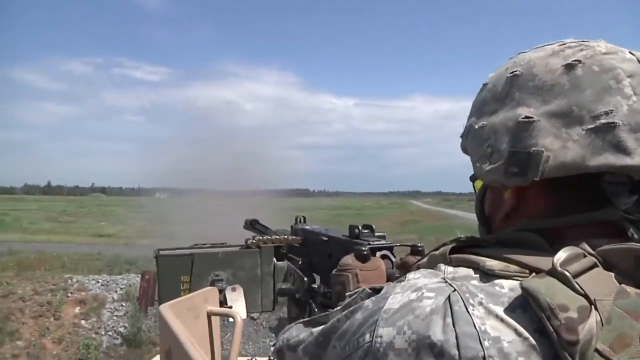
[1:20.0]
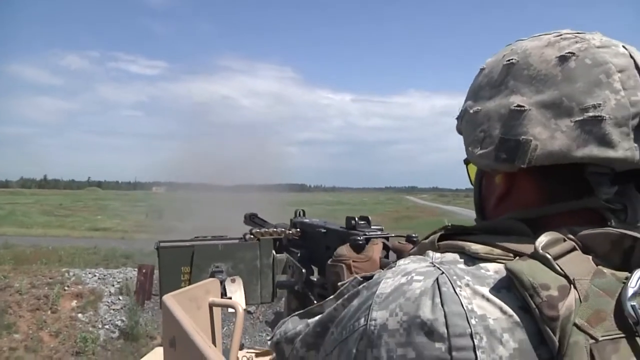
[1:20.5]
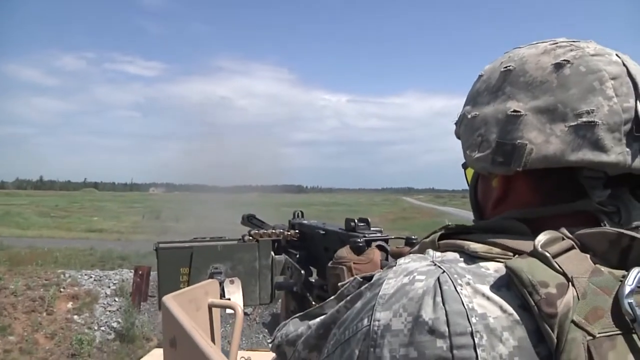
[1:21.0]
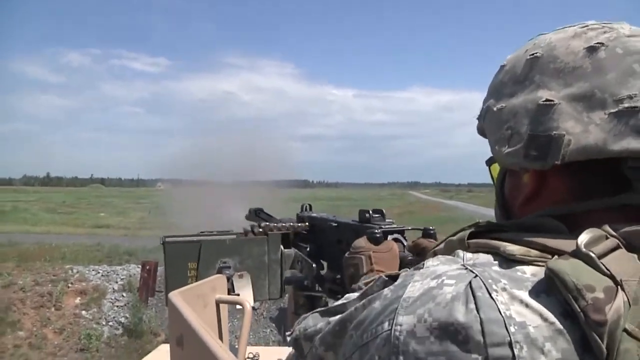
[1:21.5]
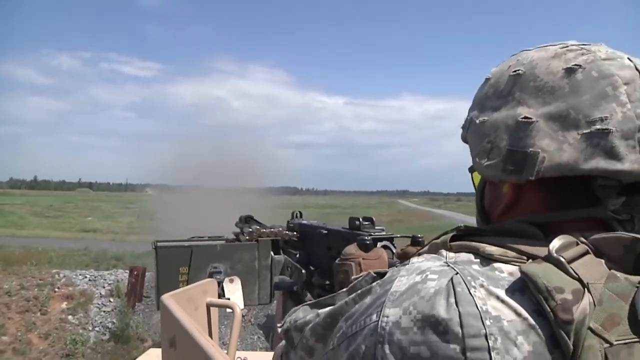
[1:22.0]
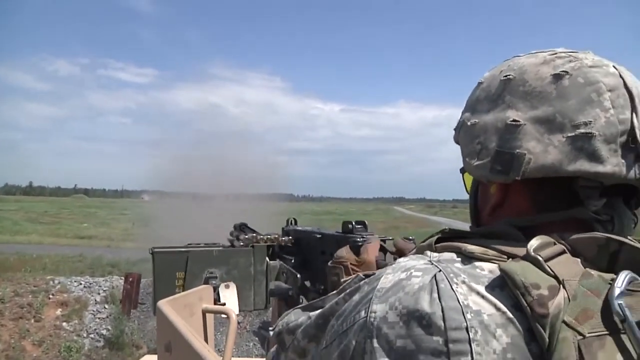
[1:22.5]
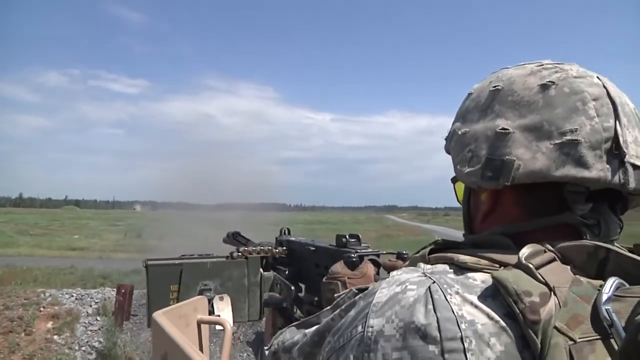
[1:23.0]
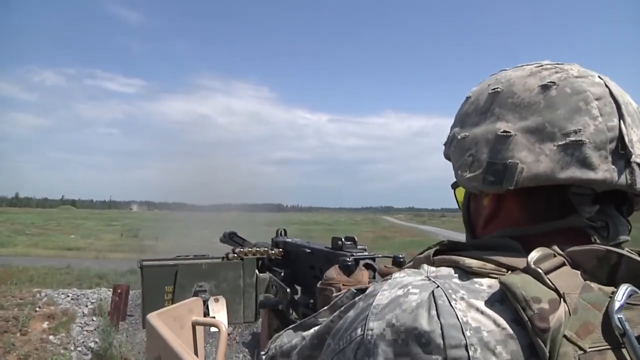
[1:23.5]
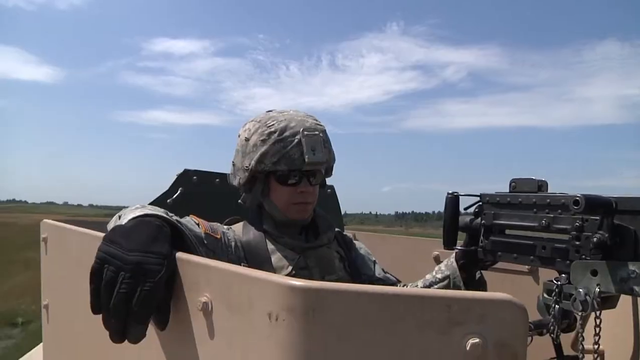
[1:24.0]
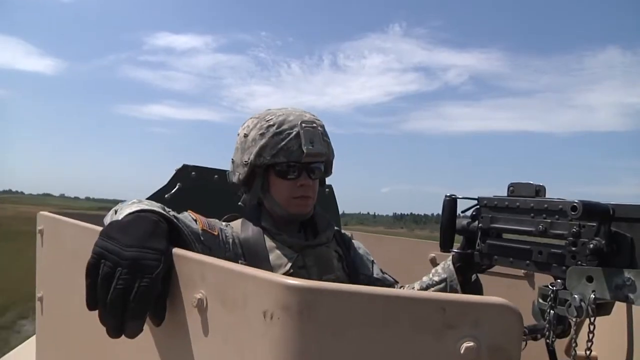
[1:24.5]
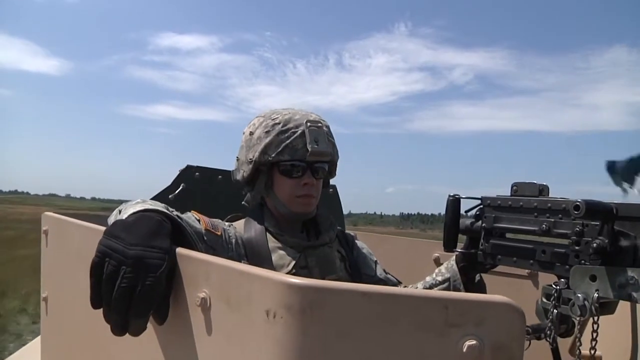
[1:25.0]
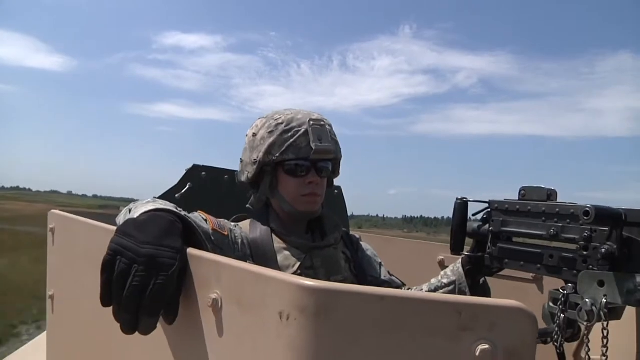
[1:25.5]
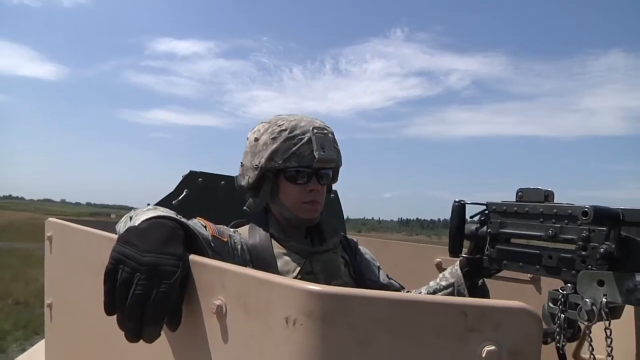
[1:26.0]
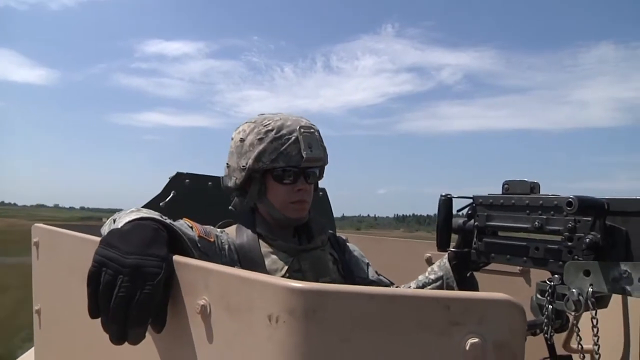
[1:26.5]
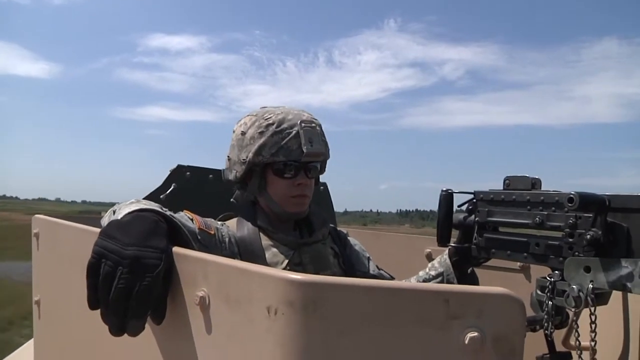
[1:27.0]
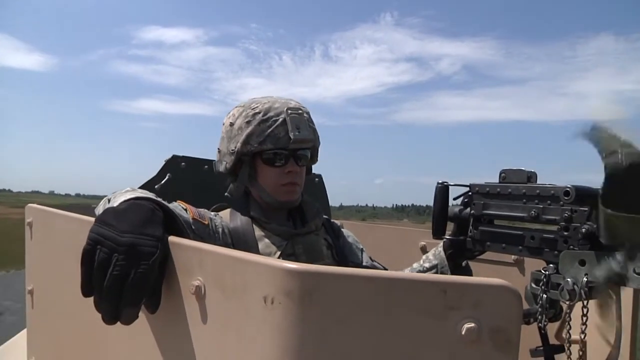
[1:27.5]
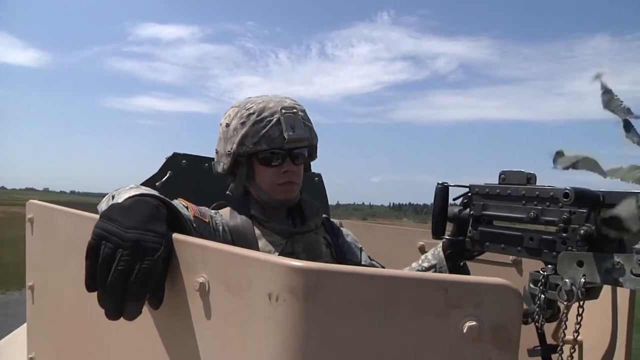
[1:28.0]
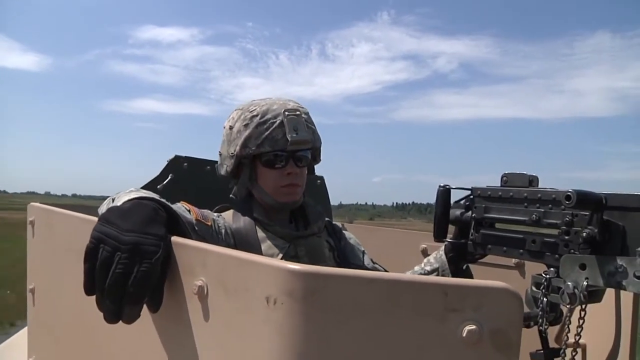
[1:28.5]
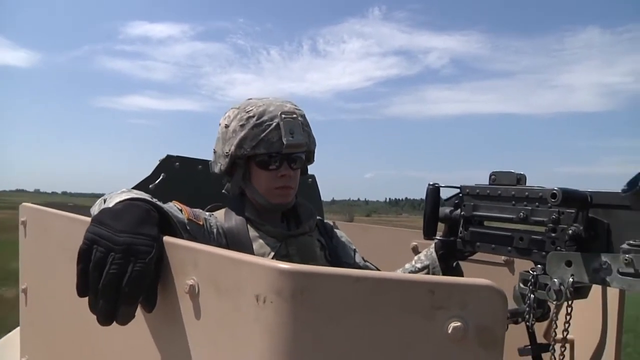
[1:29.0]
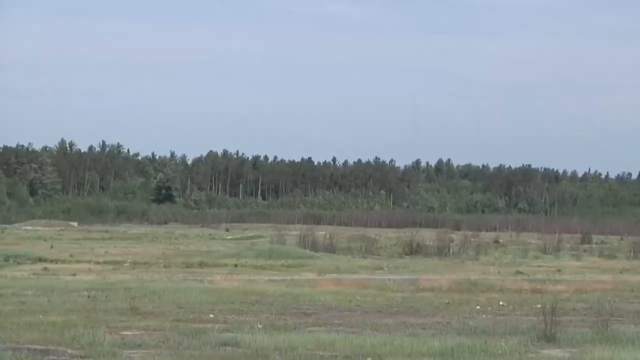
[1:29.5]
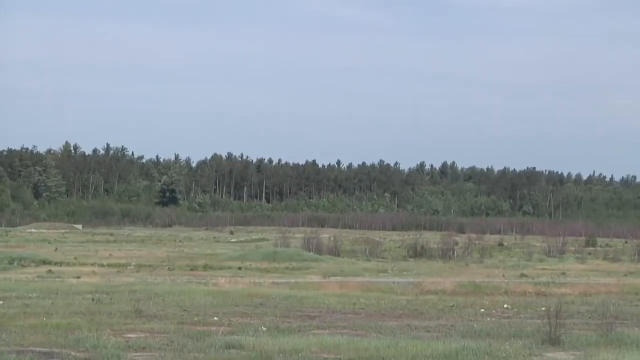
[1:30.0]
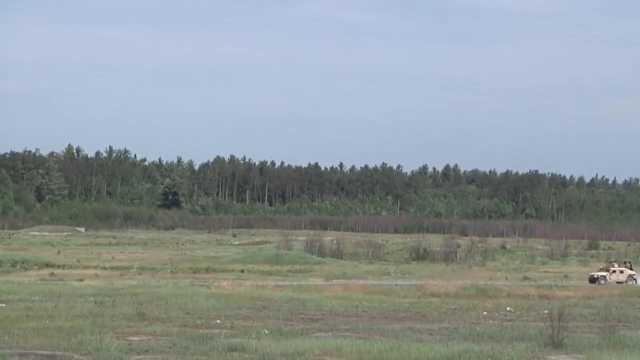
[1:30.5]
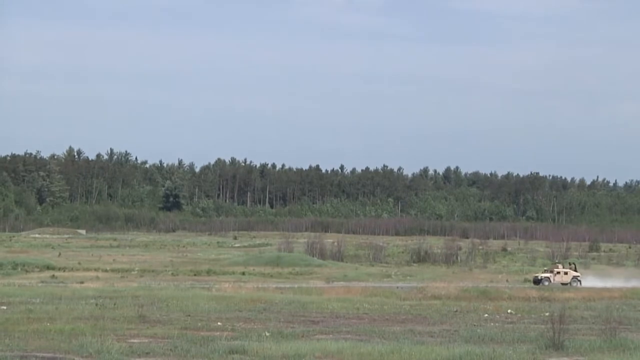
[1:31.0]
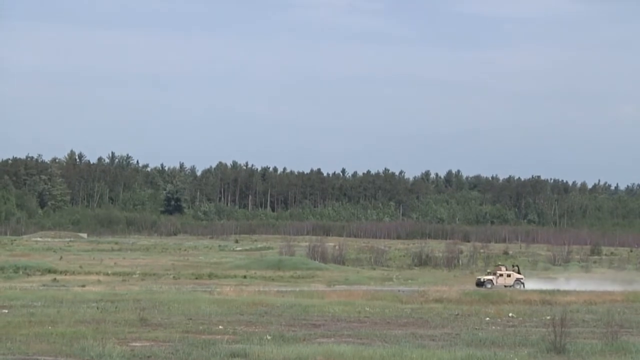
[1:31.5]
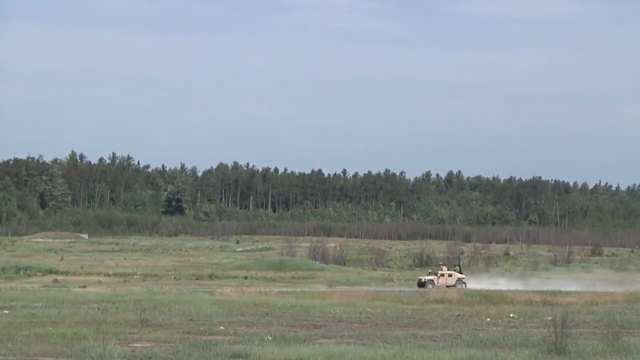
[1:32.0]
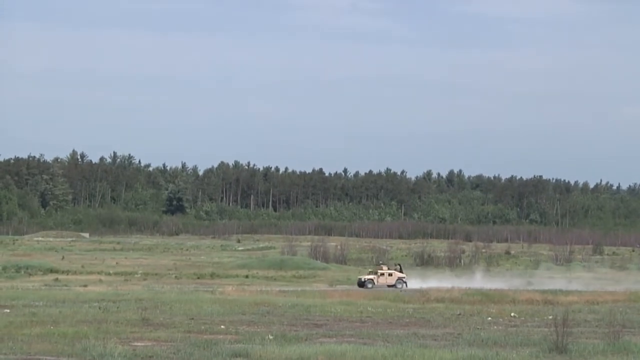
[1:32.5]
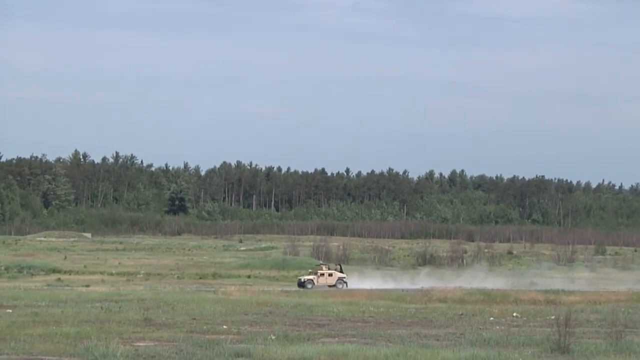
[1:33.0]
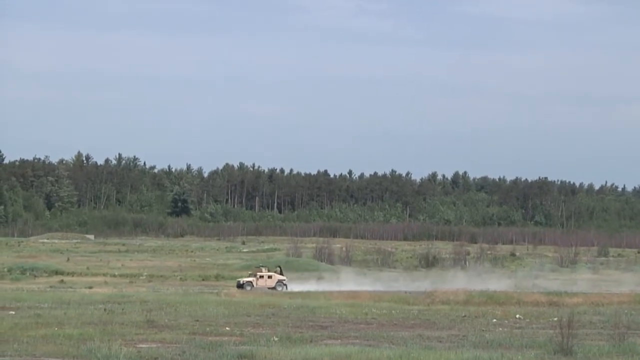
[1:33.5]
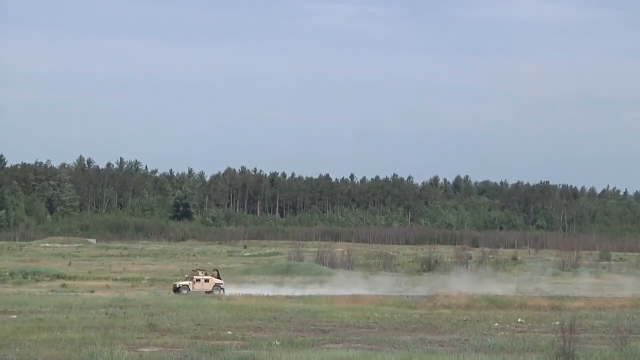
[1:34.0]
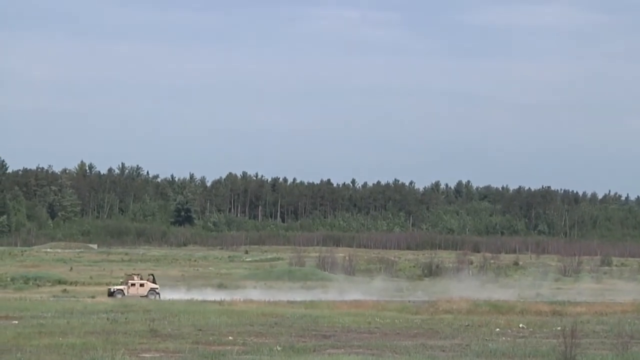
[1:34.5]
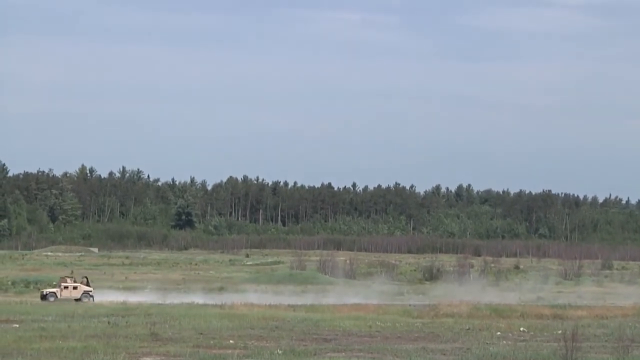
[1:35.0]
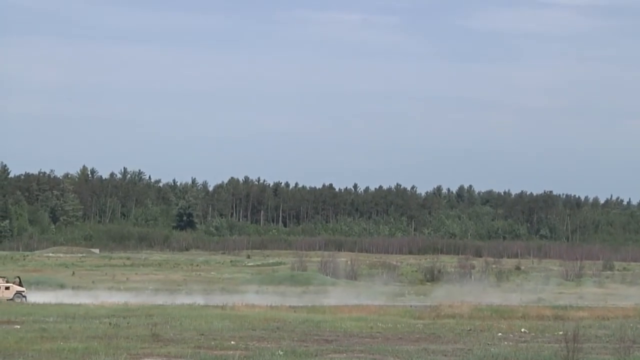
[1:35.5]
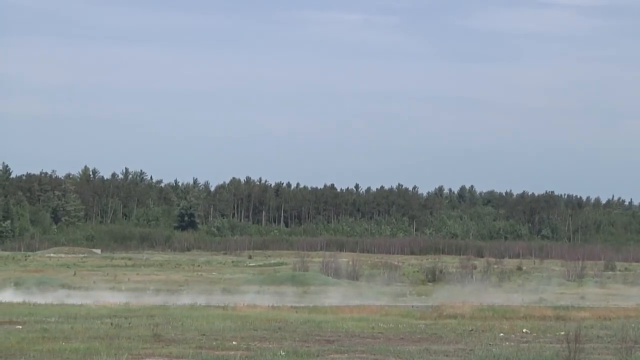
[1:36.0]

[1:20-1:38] The soldiers are back shooting in the open field with the military vehicles. The vibration and recoil on the soldiers show the power of the guns. One soldier shoots in a controlled manner, letting three or four rounds fire before he stops. Then the soldier is seen from the front, just seated while the vehicle moves at a faster speed, leaving dust behind where it passes. Trees are in the background of the open field. The box the ammunition comes from is visible, with shells dropping and popping everywhere. It is a bright sunny day; the camera follows the military vehicle, shown alone in the open.